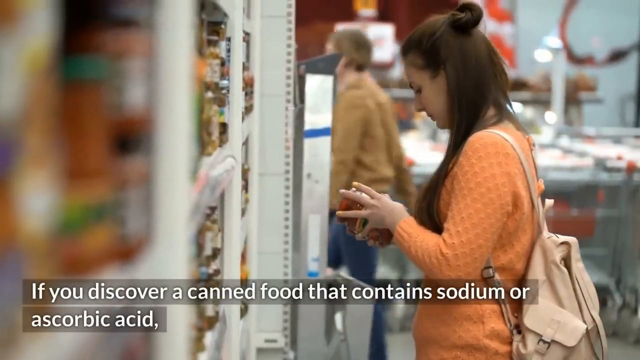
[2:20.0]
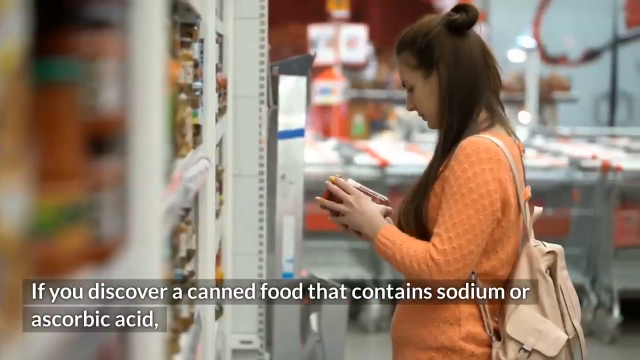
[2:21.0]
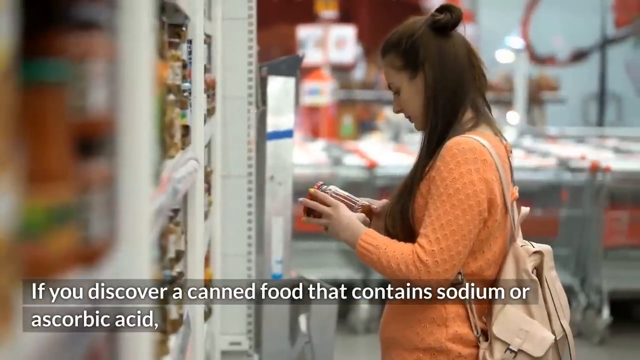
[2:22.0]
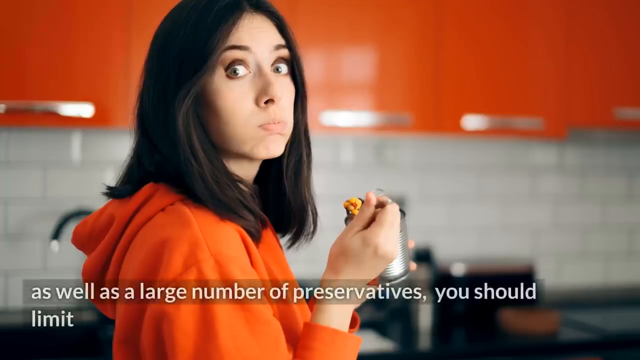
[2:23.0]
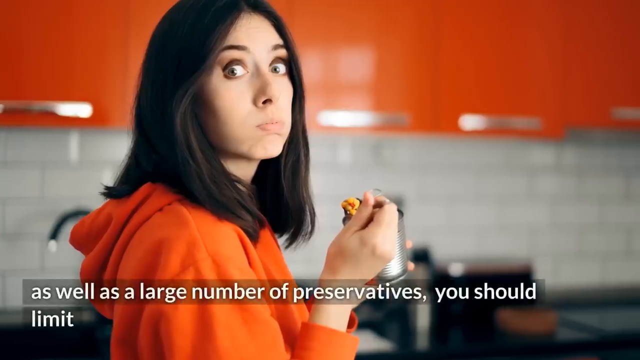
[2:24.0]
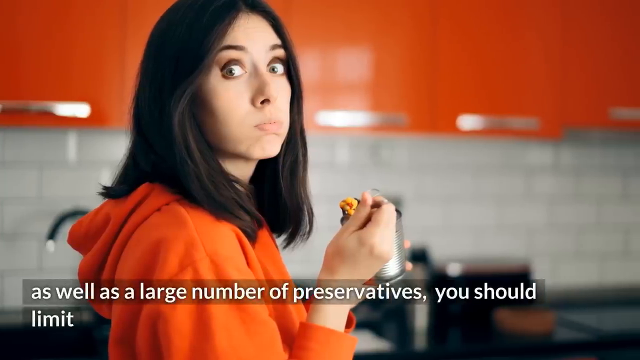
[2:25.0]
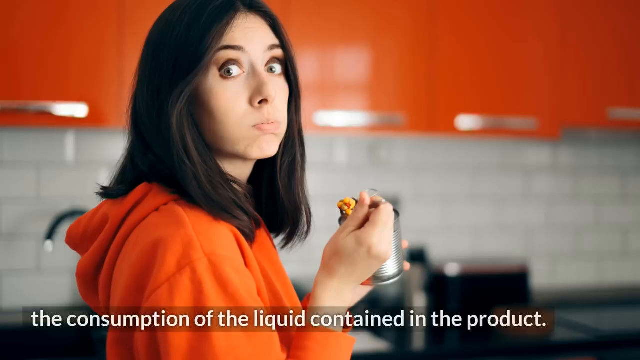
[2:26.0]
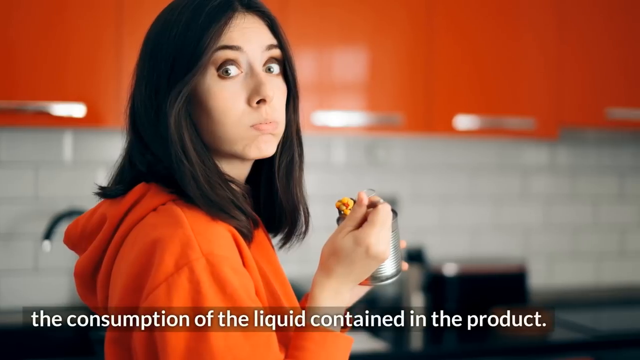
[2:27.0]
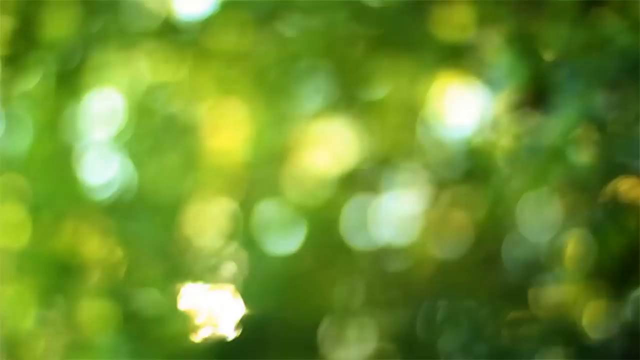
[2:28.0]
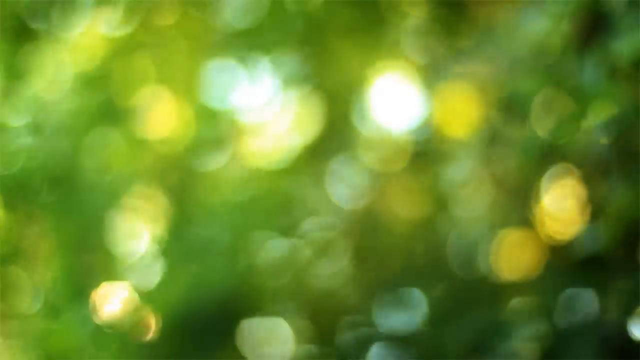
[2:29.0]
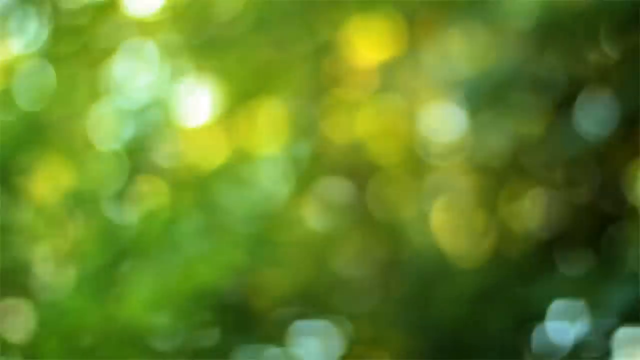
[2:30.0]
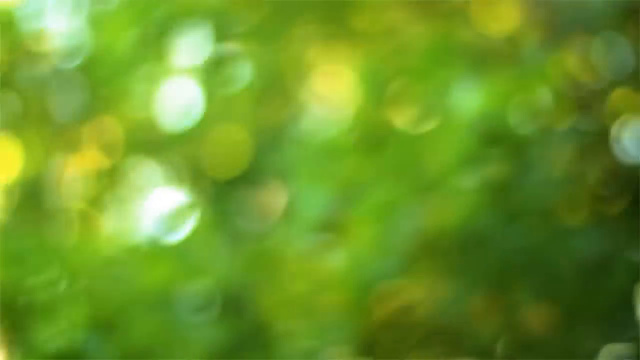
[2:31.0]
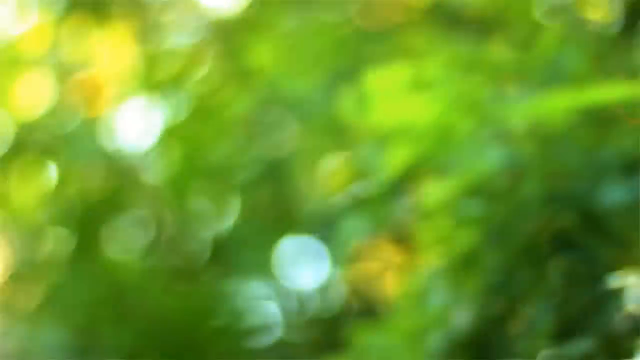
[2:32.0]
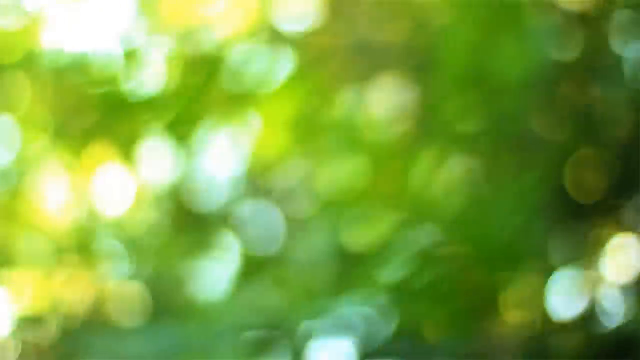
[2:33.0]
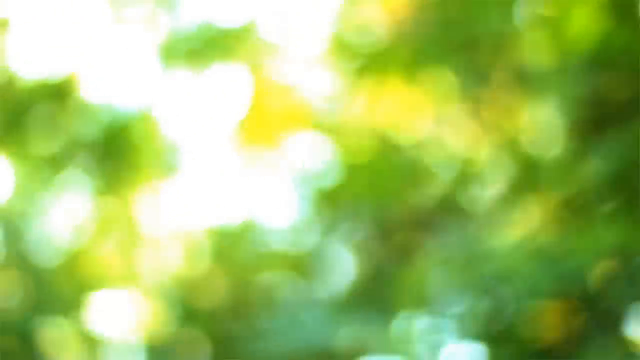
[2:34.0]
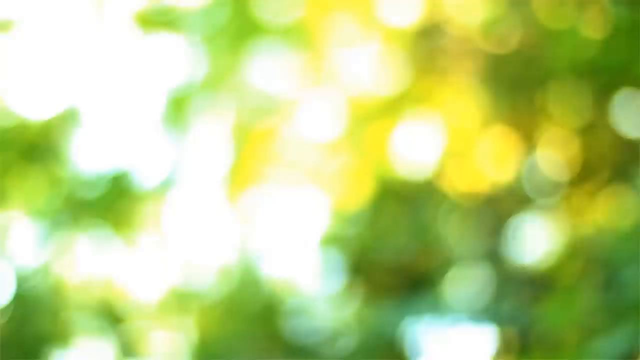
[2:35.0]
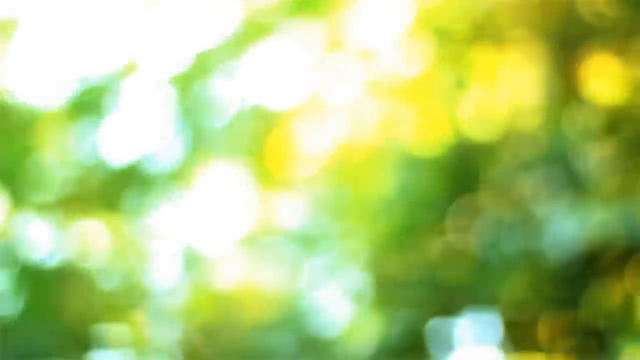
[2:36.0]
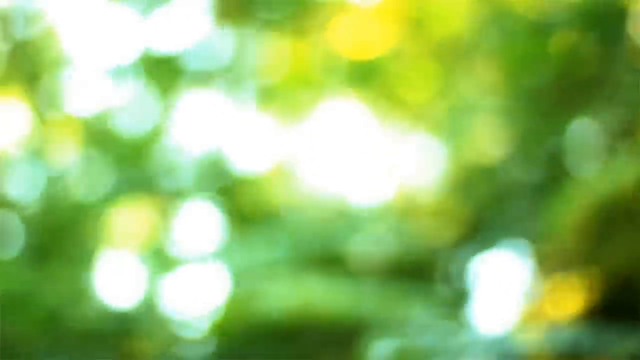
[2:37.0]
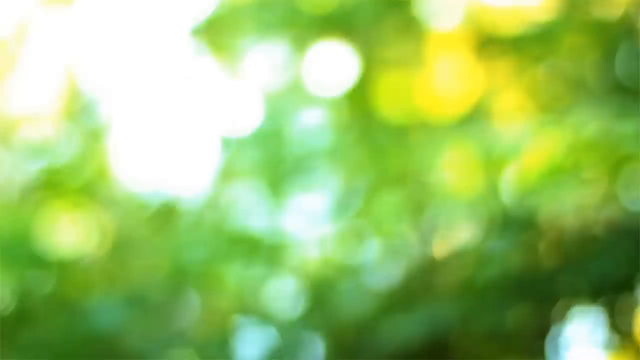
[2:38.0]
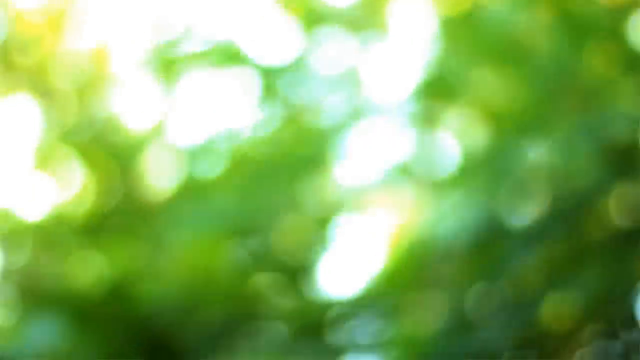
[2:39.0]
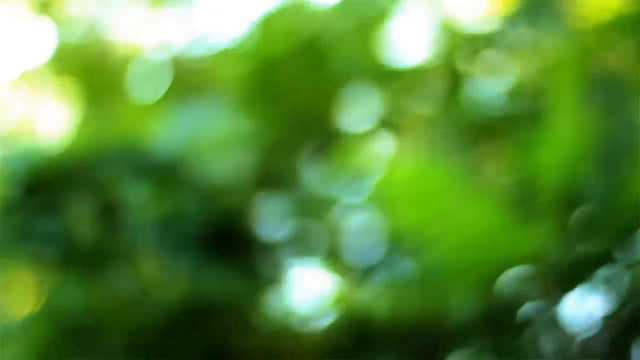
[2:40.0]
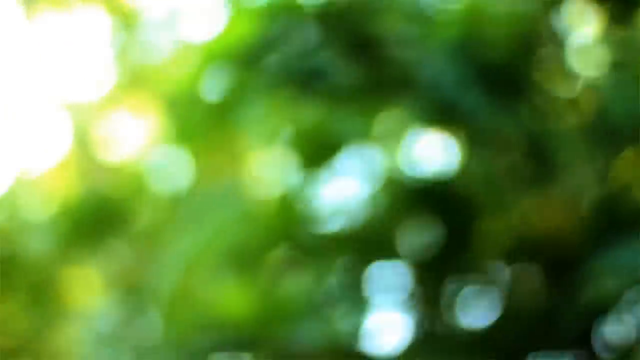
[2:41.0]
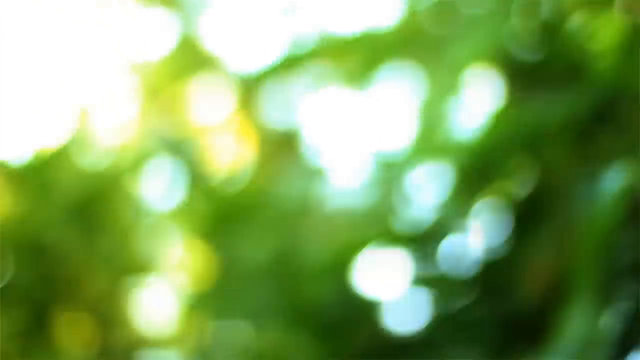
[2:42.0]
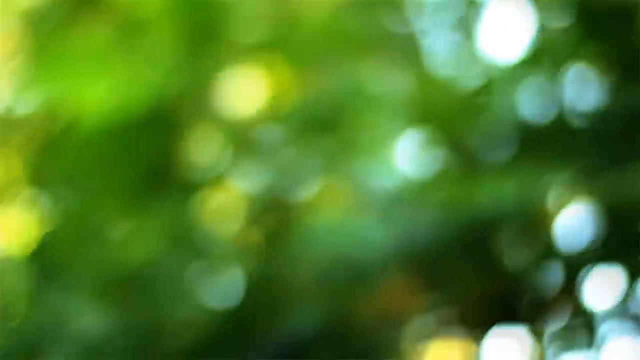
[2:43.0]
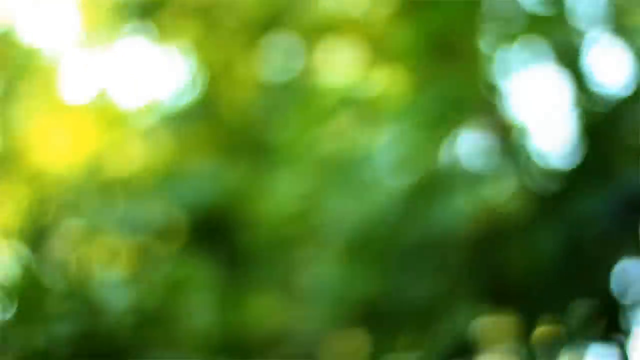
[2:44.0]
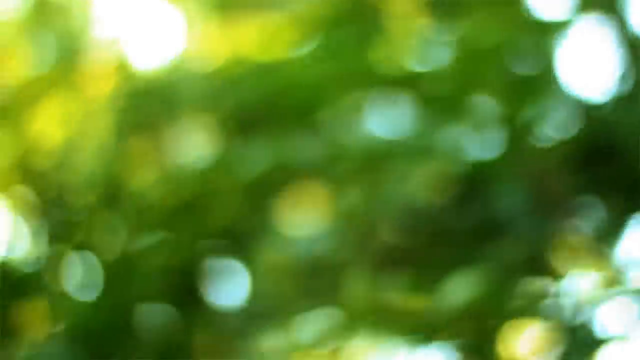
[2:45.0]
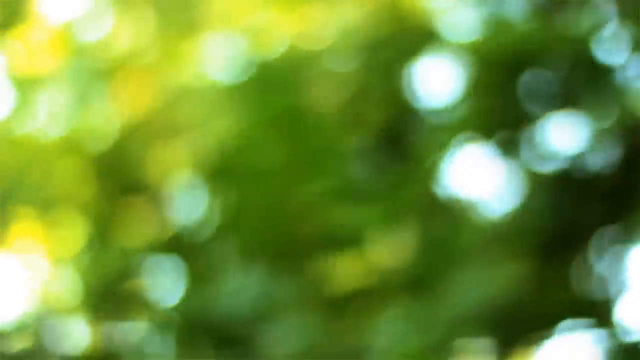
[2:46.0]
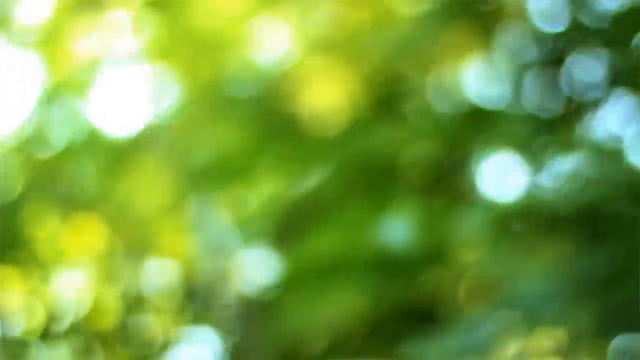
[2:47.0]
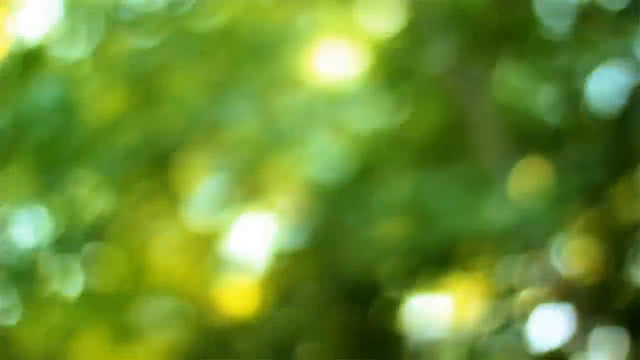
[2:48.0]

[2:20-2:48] The woman in the orange shirt with a brown backpack looks at a product on the shelf, with buggies behind her and multiple products on the shelf to her left. Next, a woman eats something out of a can, looking at the camera with her eyes very wide; the can in her hand appears to have no label. She looks like she is inside a house, with orange cabinets and a sink behind her. The video then goes to what looks like green bubbles or smoke outside, which does not look like much of anything.